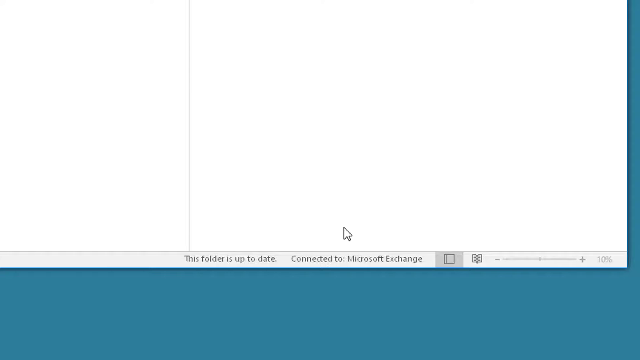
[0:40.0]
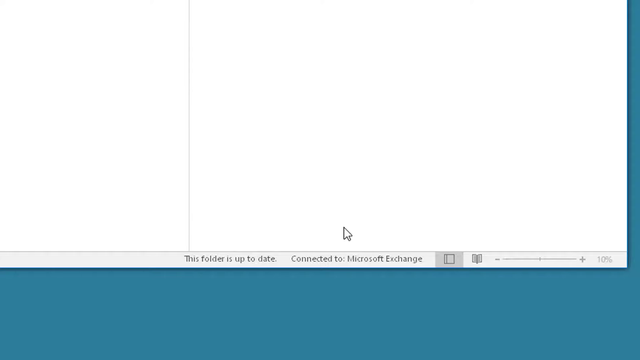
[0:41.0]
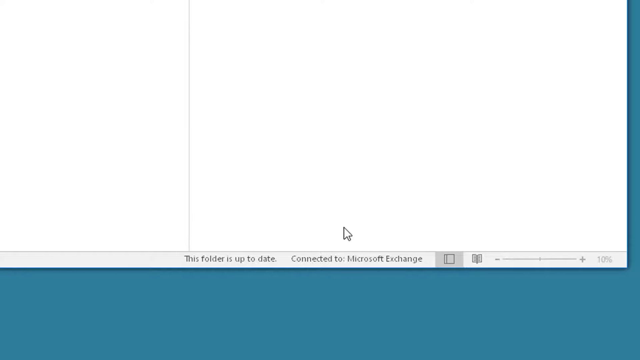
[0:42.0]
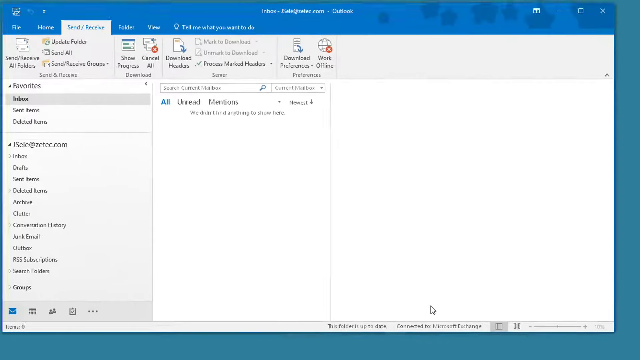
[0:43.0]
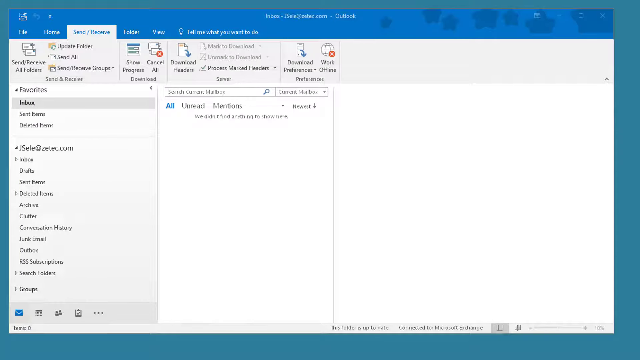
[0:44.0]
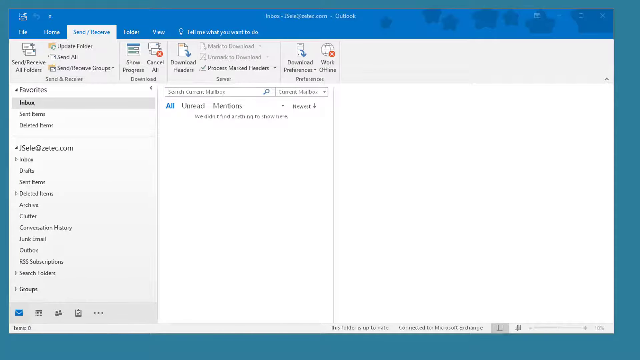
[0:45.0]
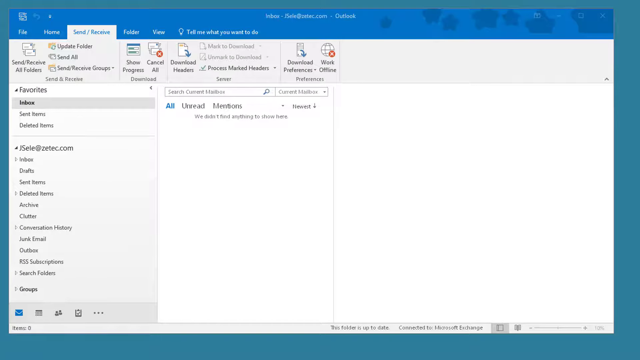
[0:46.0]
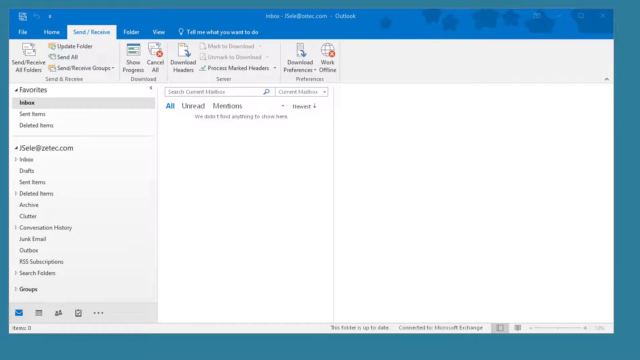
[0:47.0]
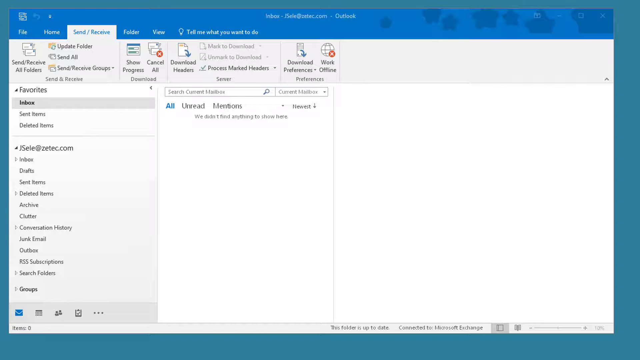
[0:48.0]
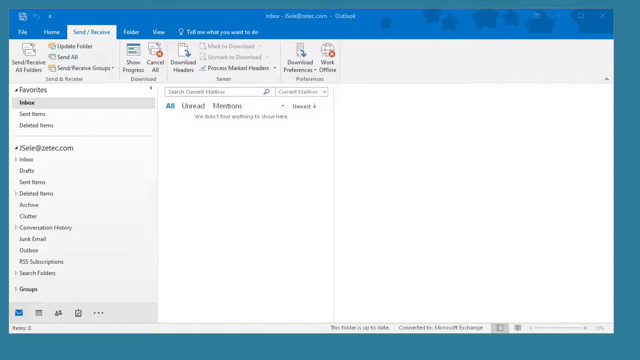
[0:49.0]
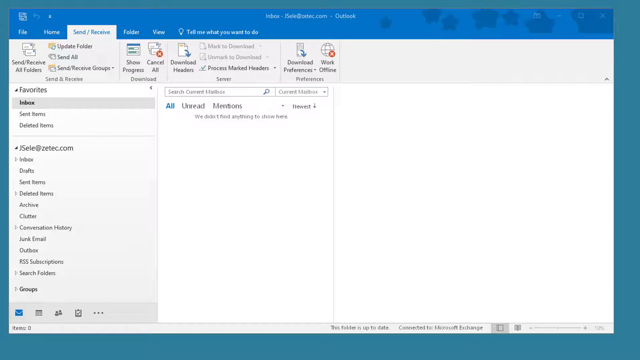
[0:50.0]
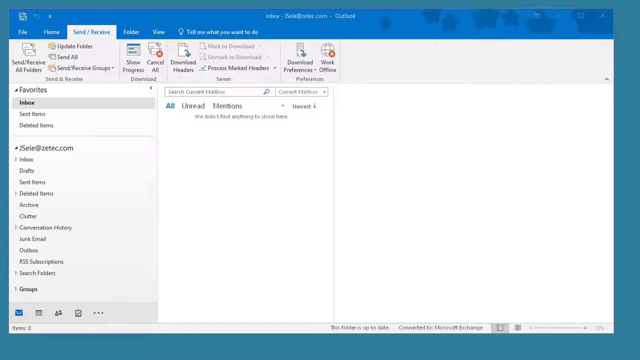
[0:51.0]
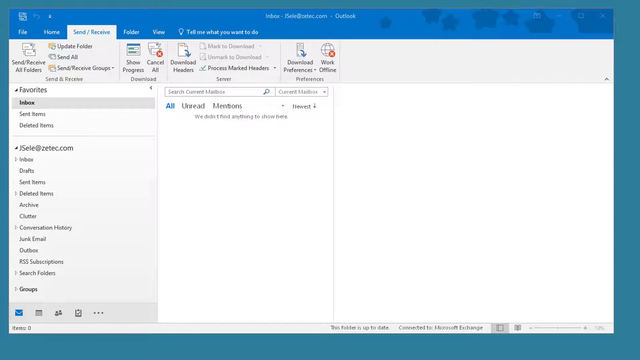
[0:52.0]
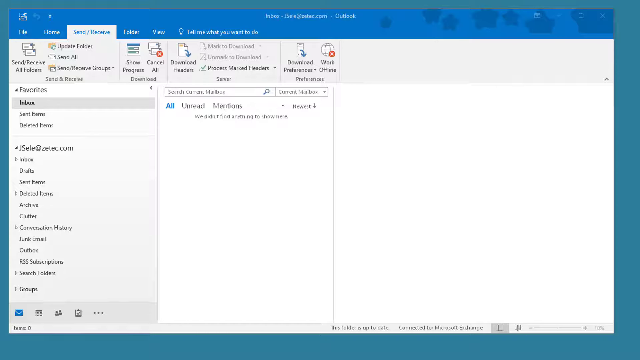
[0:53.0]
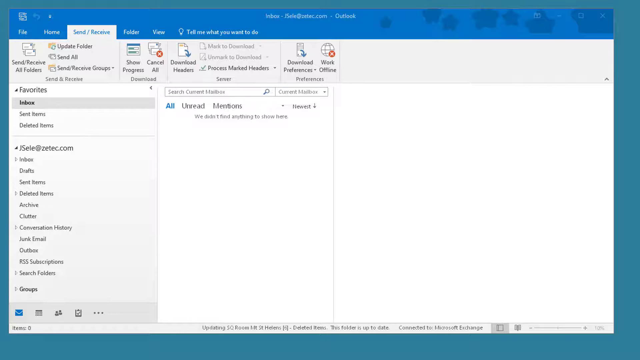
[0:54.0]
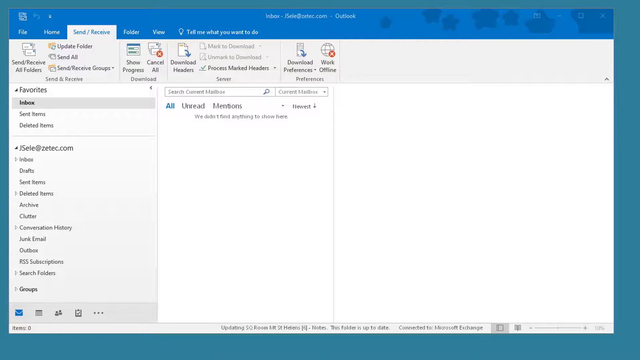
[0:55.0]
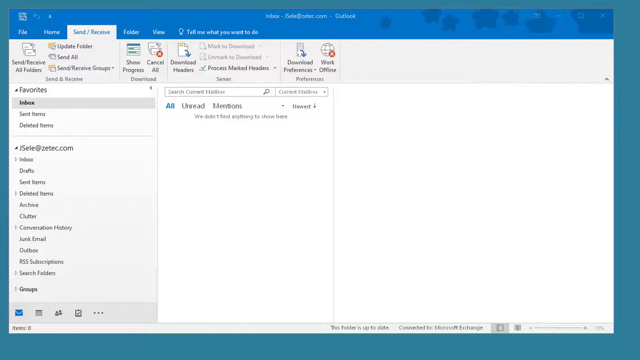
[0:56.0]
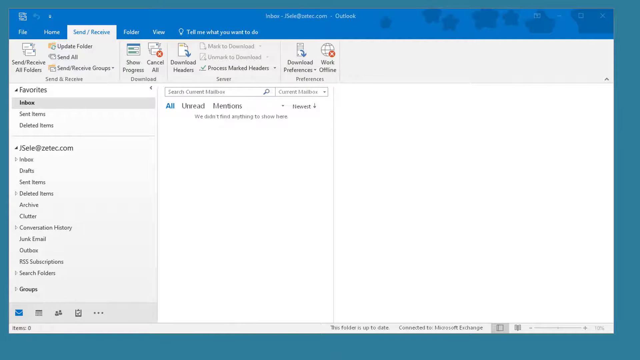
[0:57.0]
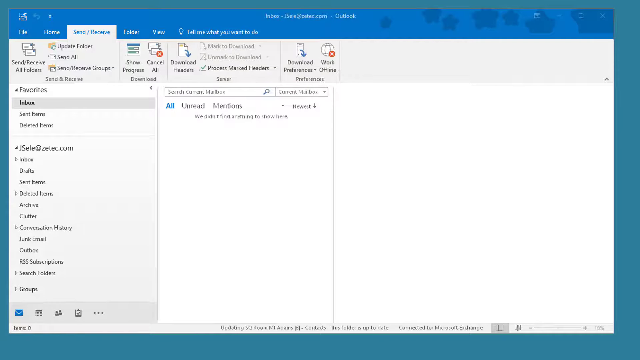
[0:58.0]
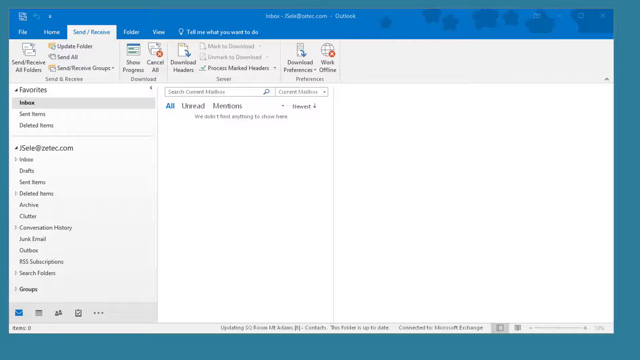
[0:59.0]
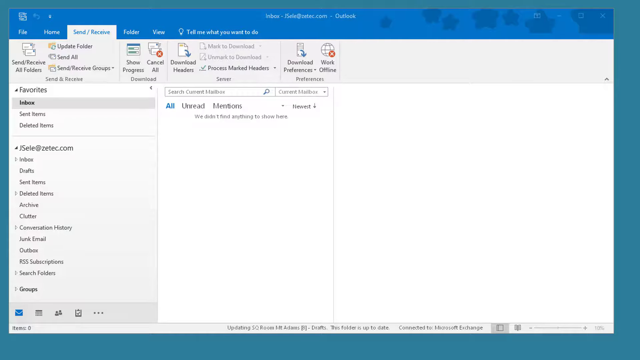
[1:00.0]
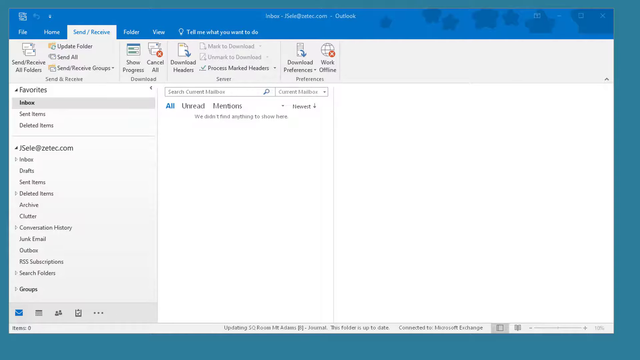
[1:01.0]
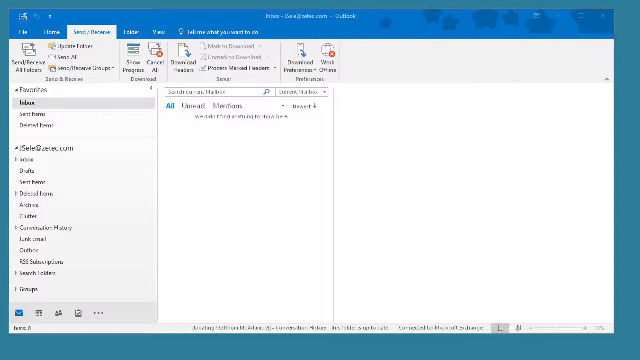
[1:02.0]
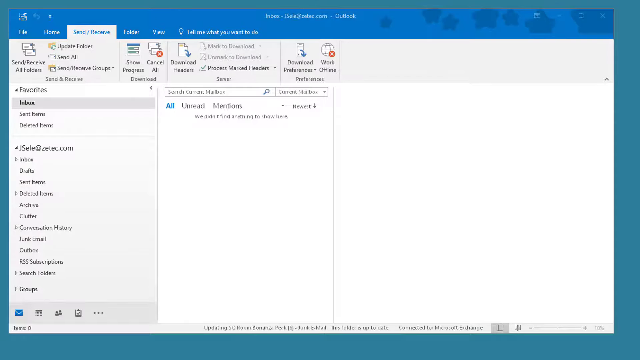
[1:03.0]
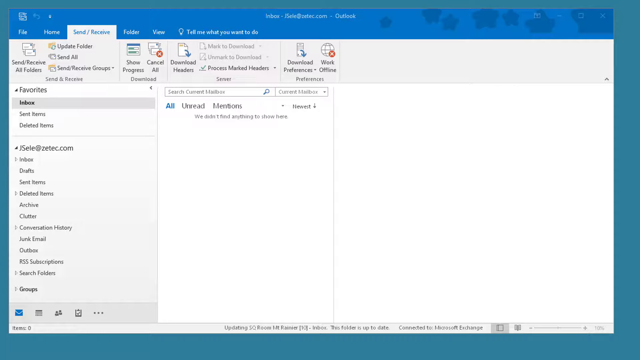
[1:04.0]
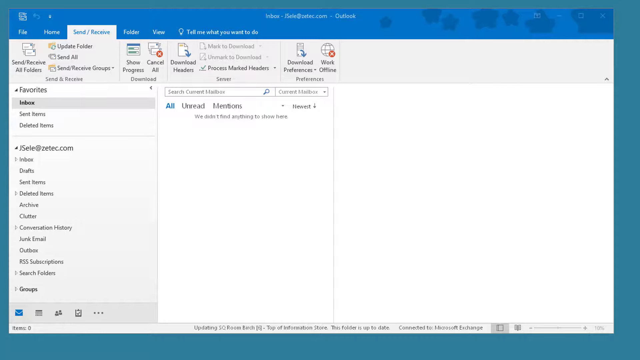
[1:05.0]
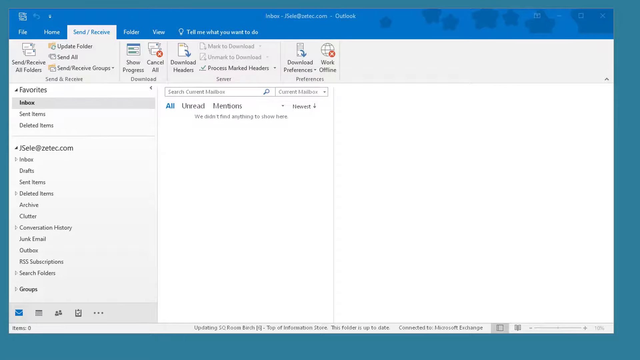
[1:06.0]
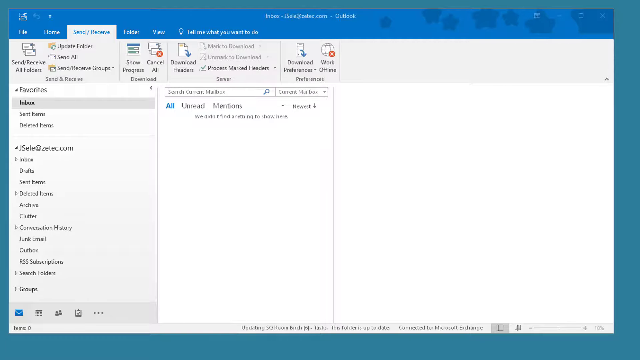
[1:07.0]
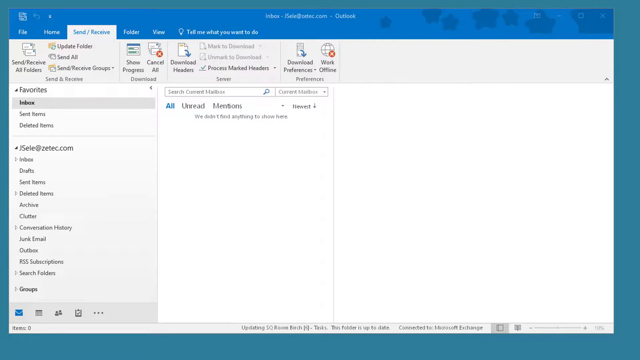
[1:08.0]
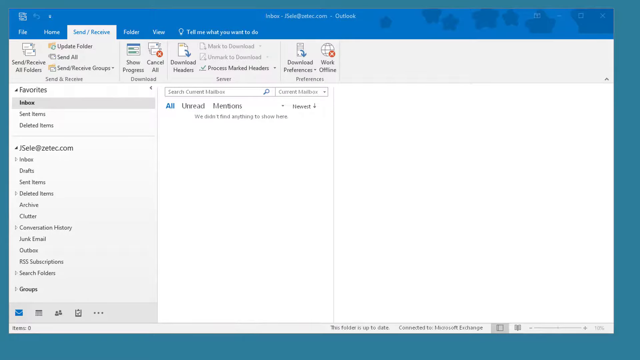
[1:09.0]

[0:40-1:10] The view stays on the working offline status of Jay Seller's email account. The page is expanded a bit and zooms up to all unread and mentions, where a message reads "we didn't find anything to show here". The account attempts to connect to Microsoft Exchange to receive emails, but very little happens, and no new emails come into the account.